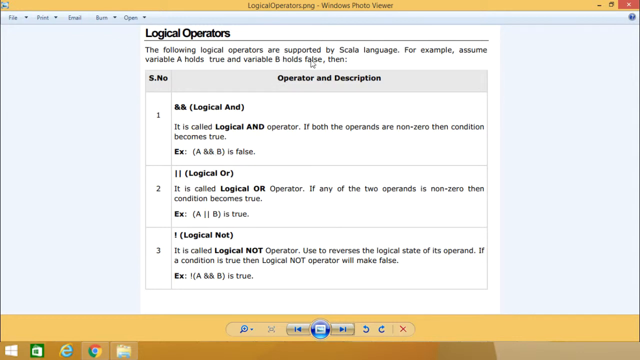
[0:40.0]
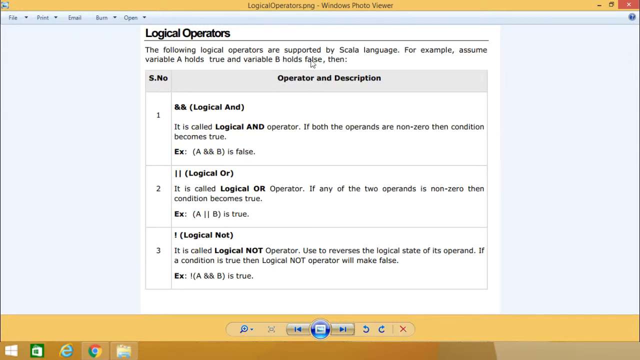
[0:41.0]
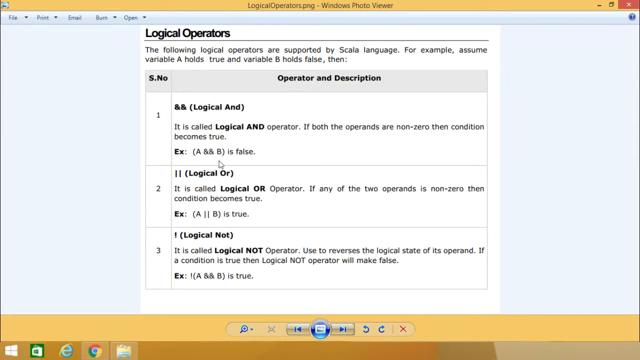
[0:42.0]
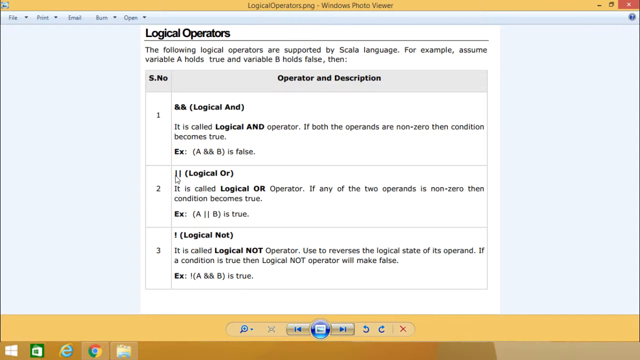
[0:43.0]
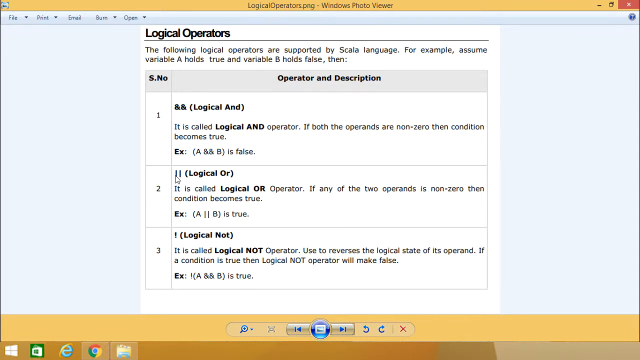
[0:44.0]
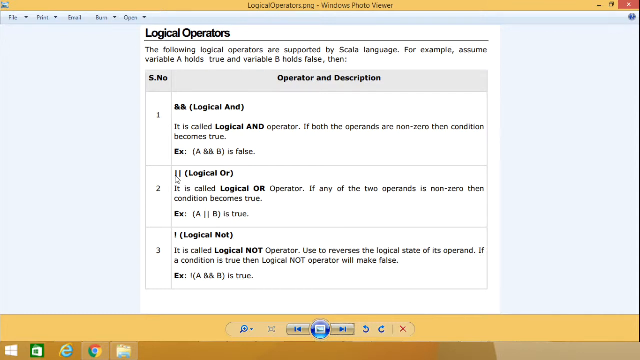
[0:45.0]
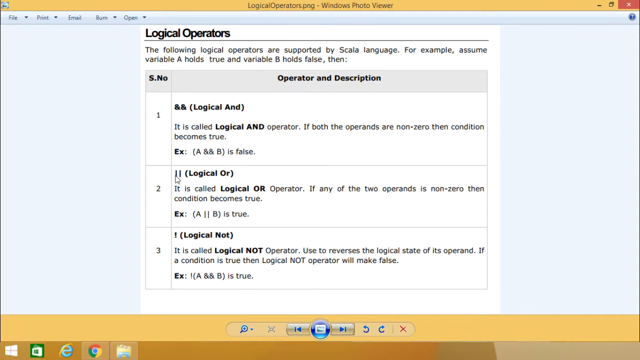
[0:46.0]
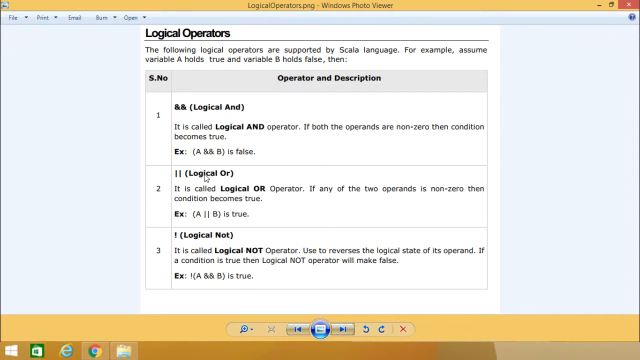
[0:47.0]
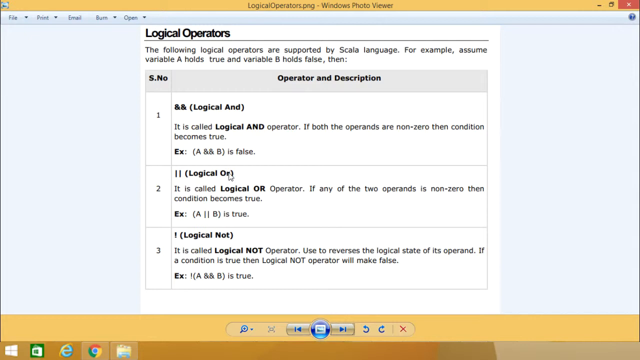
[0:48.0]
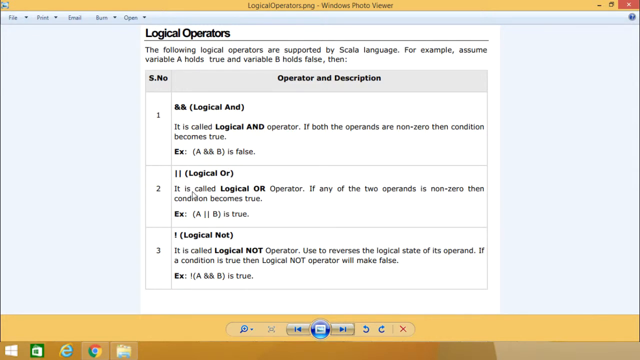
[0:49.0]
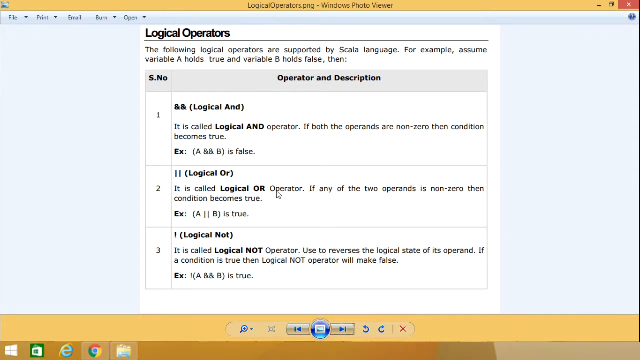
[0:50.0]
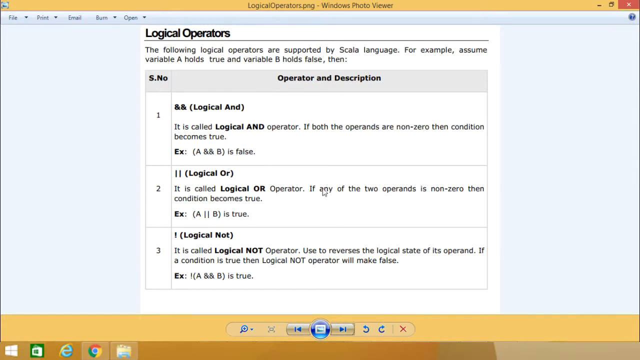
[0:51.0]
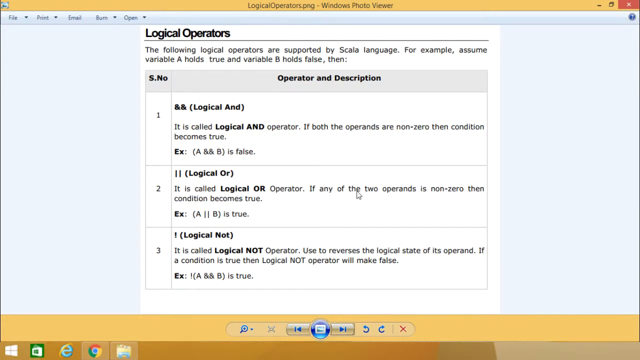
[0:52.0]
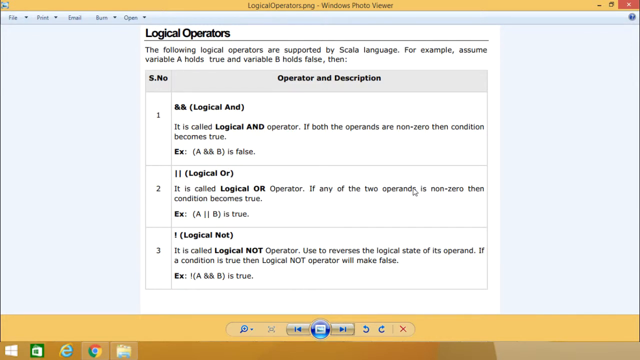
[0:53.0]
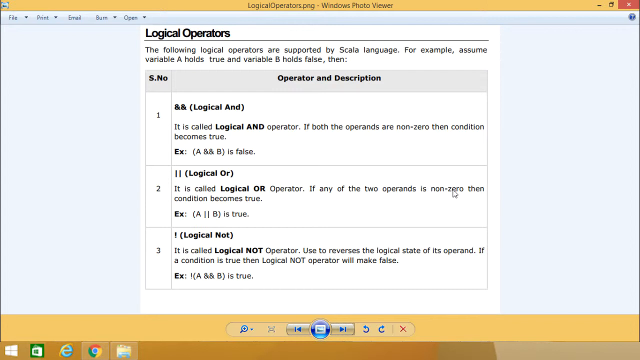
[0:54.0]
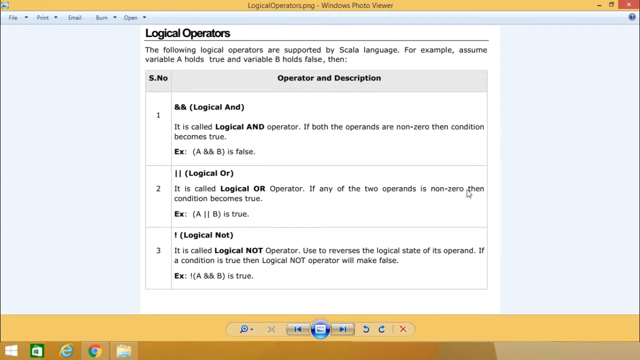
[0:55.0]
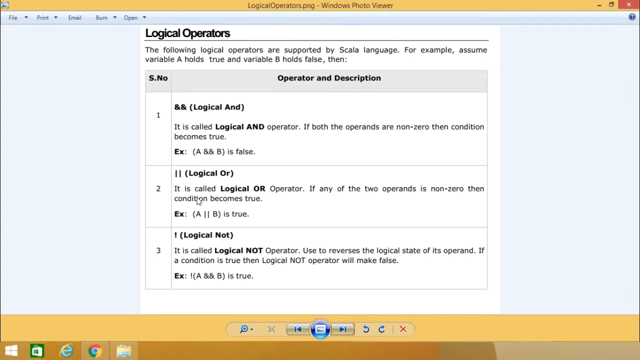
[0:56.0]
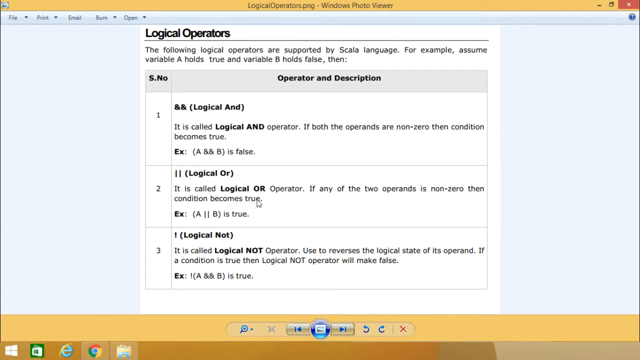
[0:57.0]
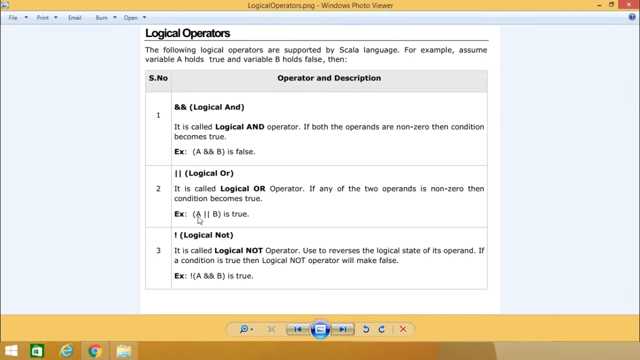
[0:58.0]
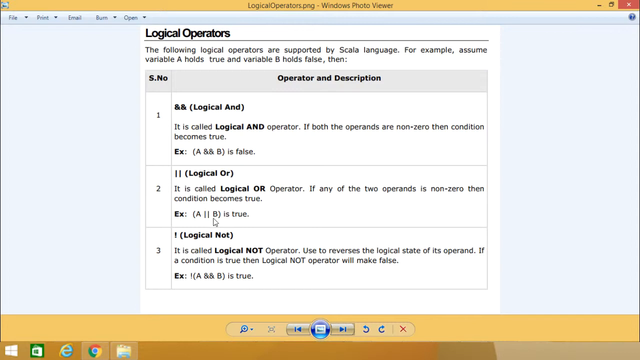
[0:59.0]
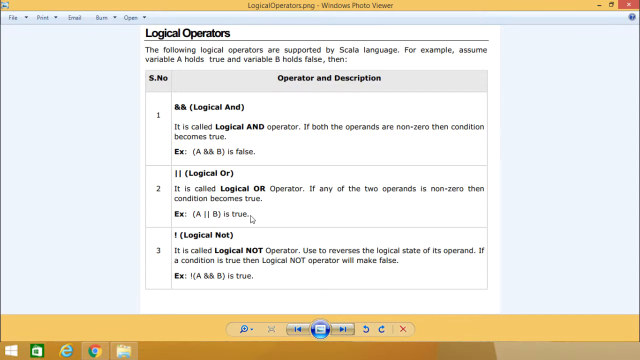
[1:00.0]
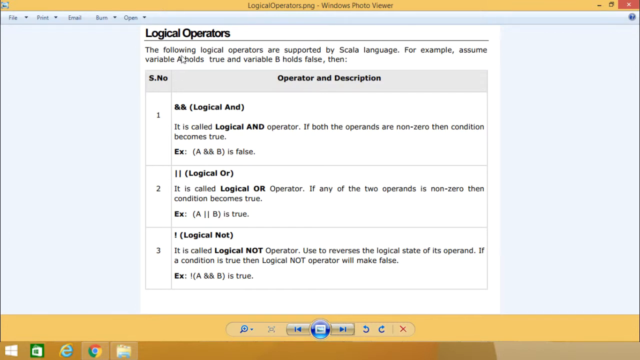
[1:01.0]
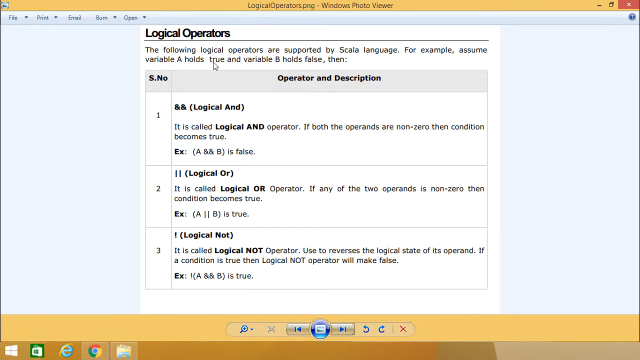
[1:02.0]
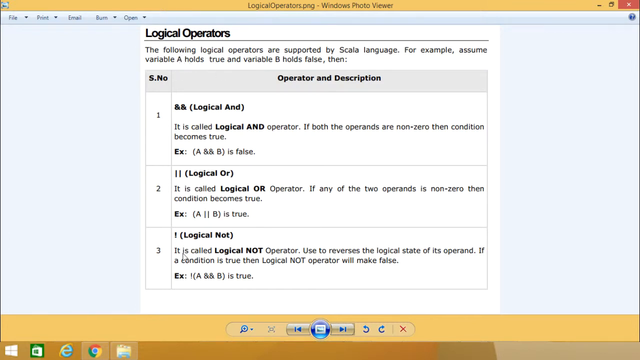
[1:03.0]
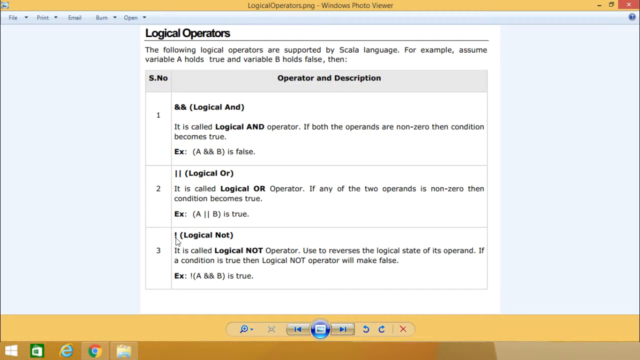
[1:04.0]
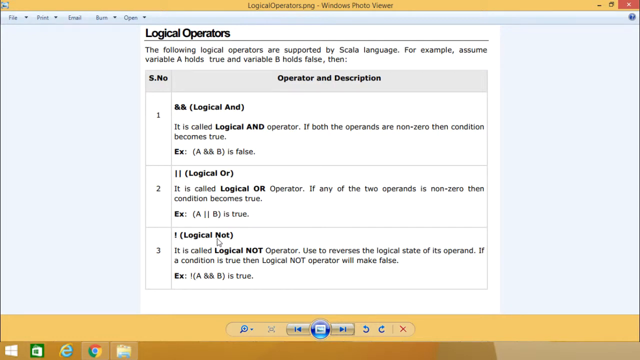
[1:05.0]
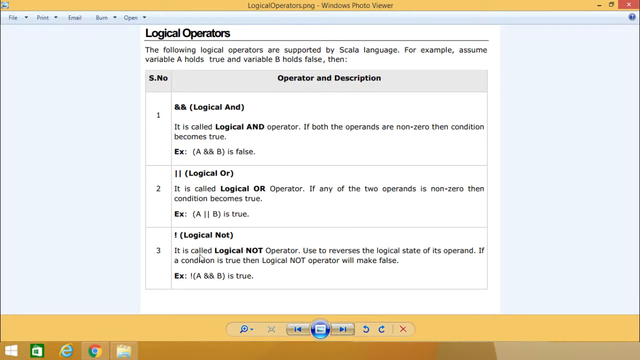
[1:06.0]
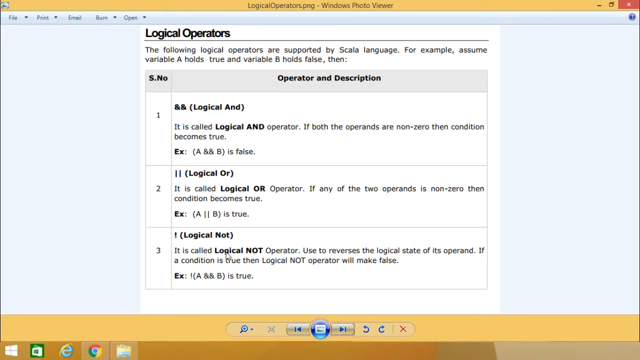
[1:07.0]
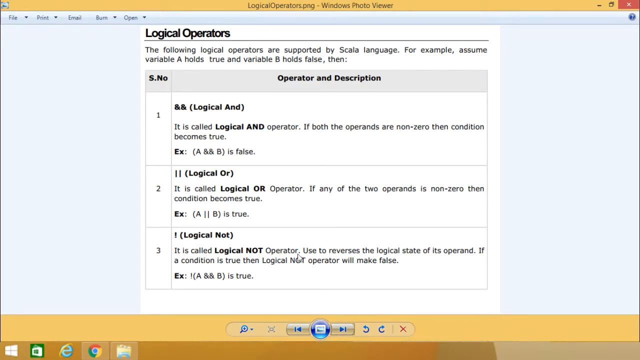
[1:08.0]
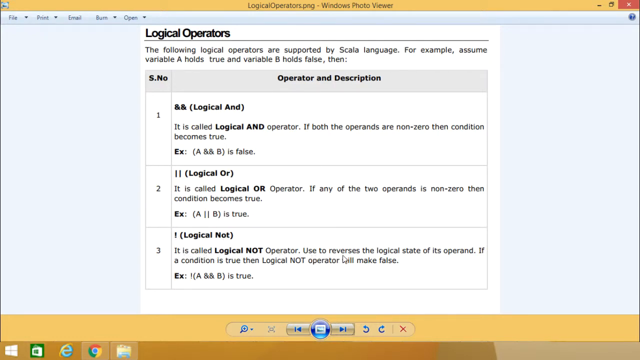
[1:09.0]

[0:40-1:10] The tutorial moves to the second logical operator, the logical or operator, represented by a vertical line typed twice in a row. Its description states that if any of the two operands is non-zero, the condition becomes true, and the example of A, the double vertical line, and then B on the right side is true.